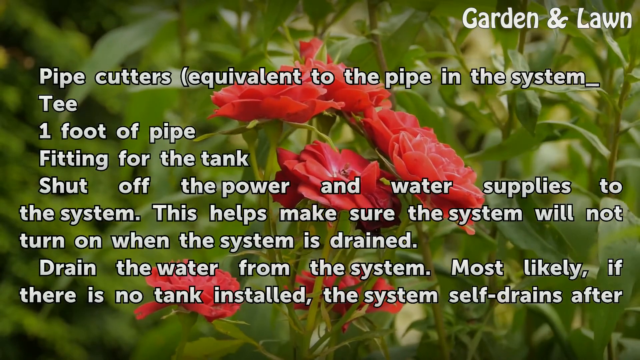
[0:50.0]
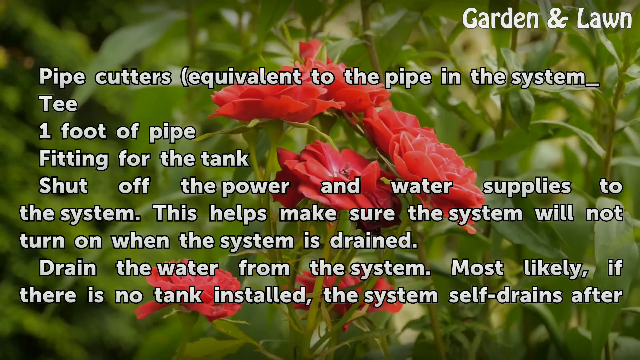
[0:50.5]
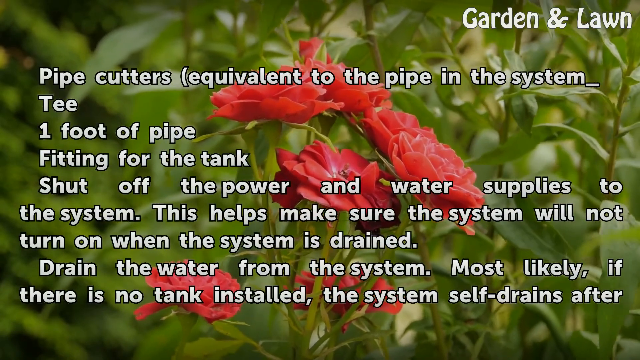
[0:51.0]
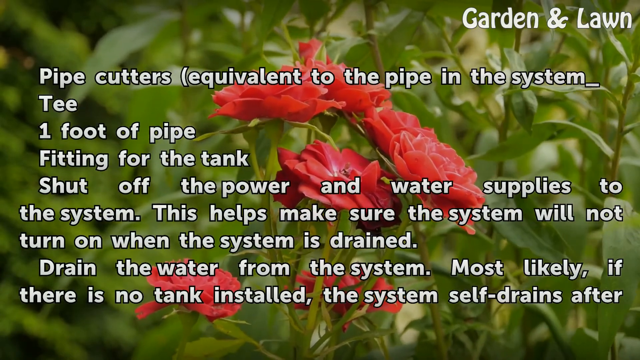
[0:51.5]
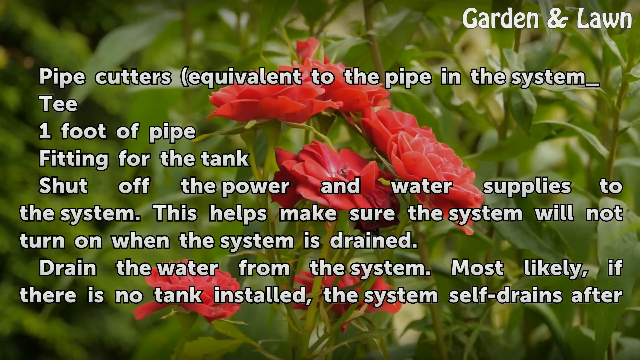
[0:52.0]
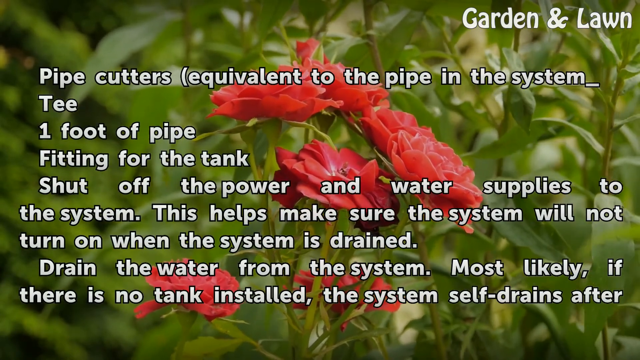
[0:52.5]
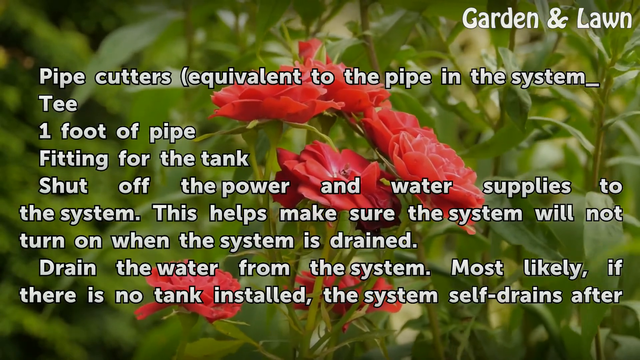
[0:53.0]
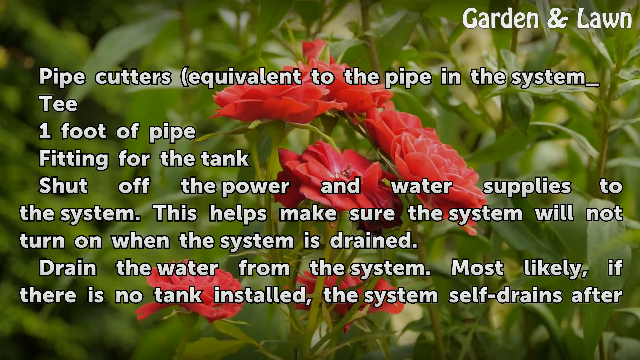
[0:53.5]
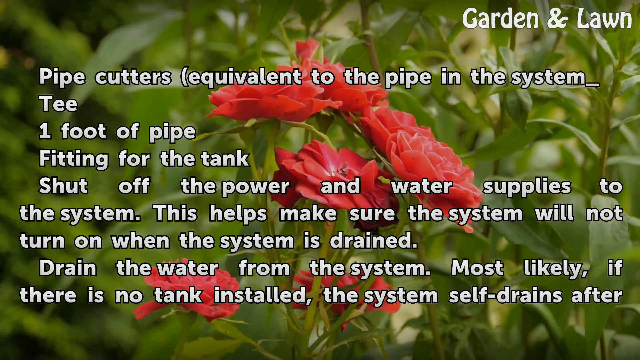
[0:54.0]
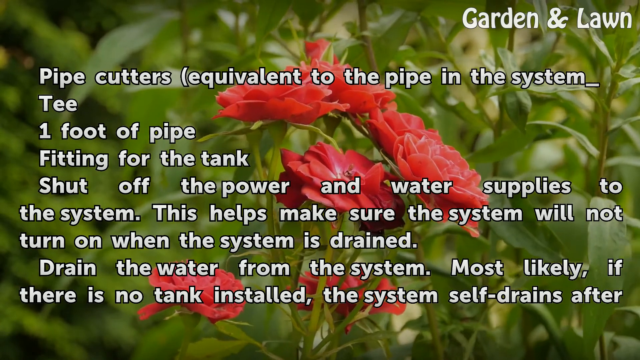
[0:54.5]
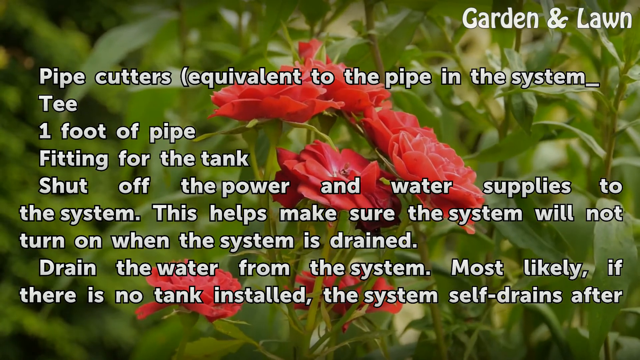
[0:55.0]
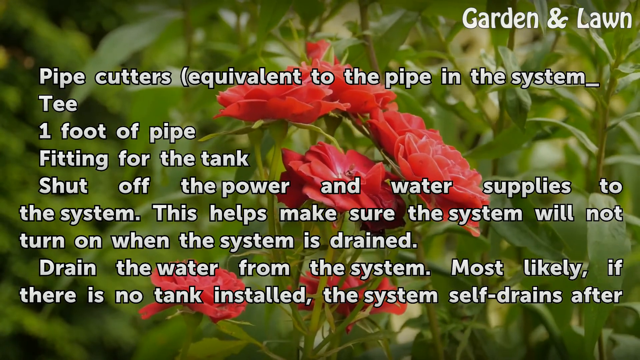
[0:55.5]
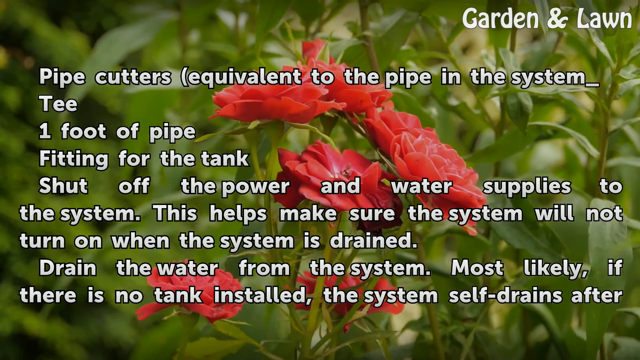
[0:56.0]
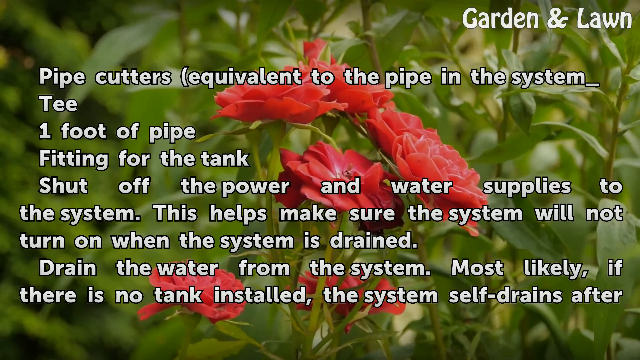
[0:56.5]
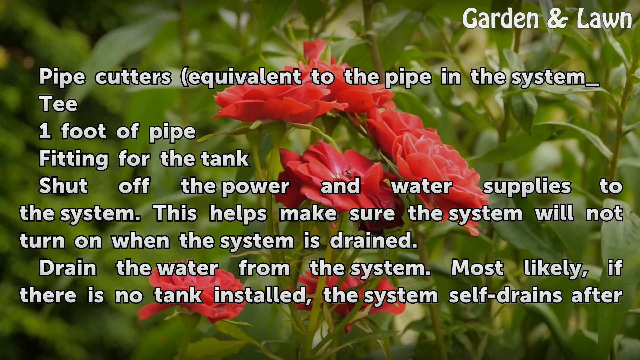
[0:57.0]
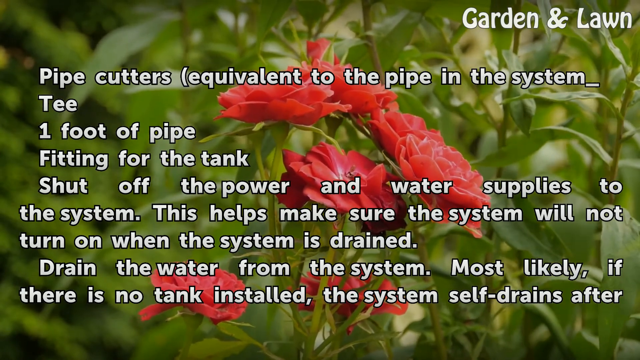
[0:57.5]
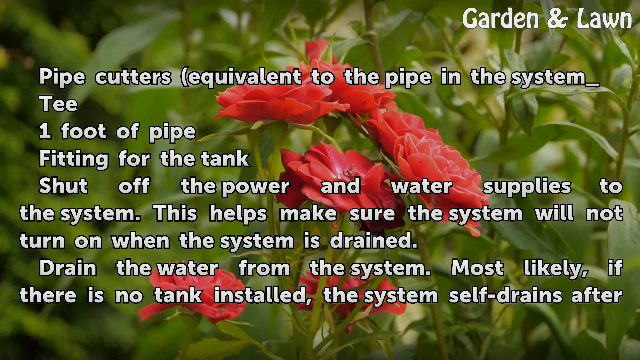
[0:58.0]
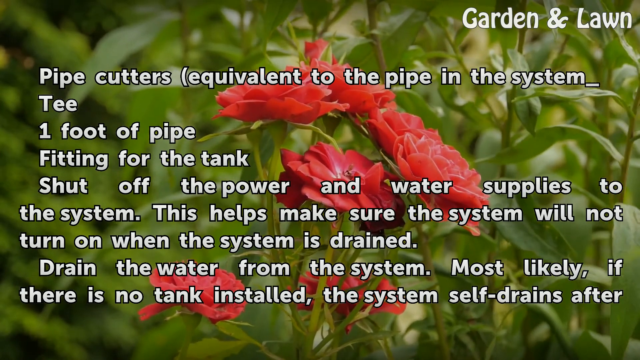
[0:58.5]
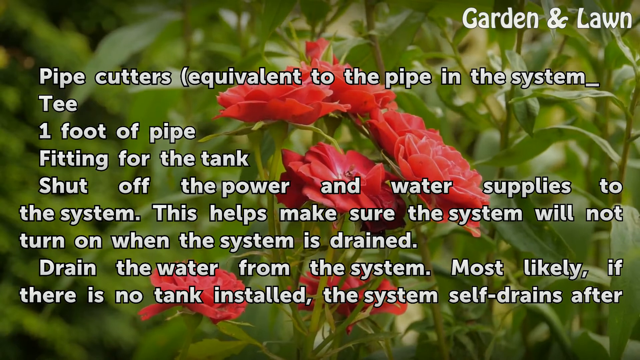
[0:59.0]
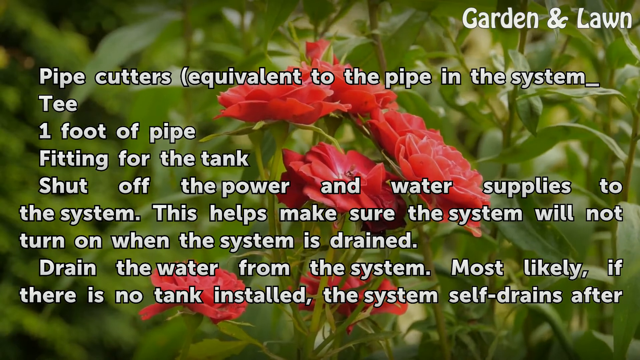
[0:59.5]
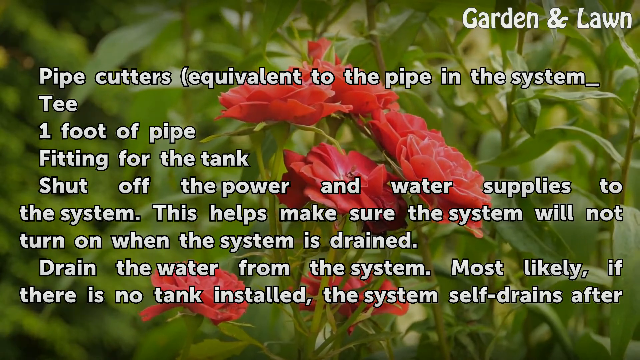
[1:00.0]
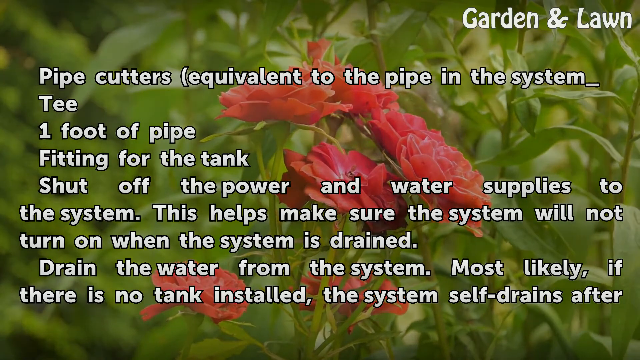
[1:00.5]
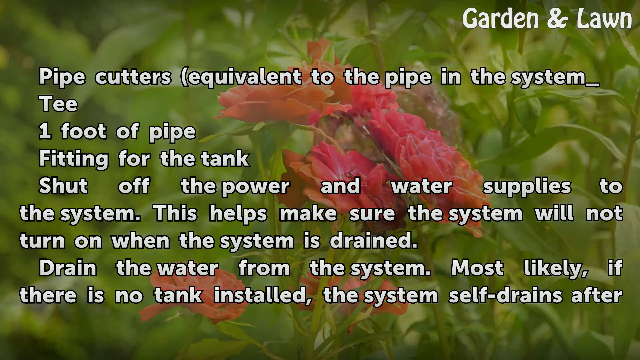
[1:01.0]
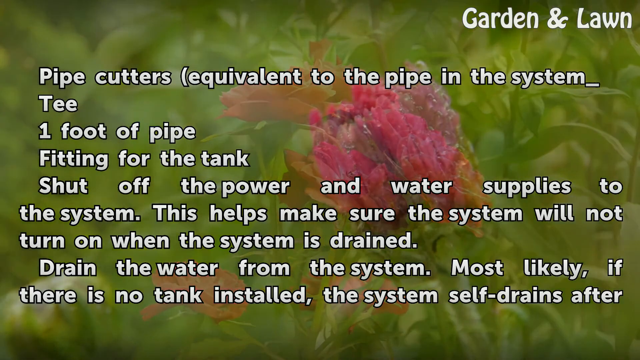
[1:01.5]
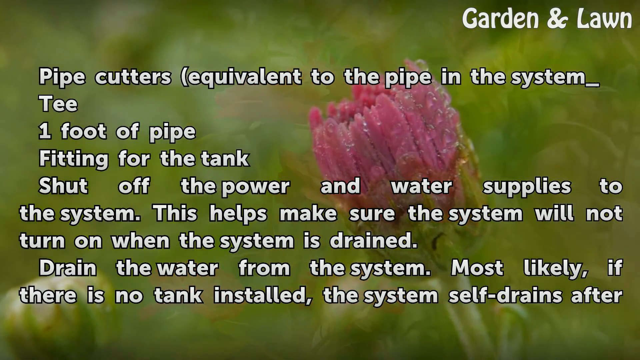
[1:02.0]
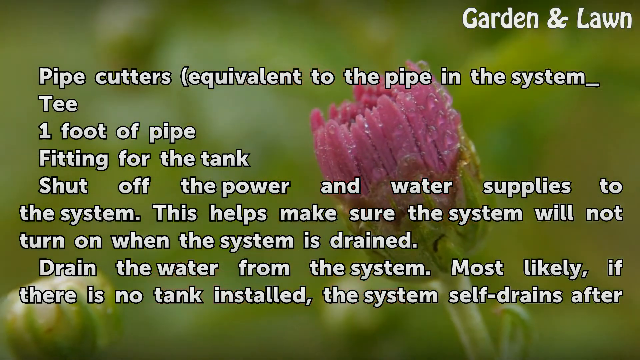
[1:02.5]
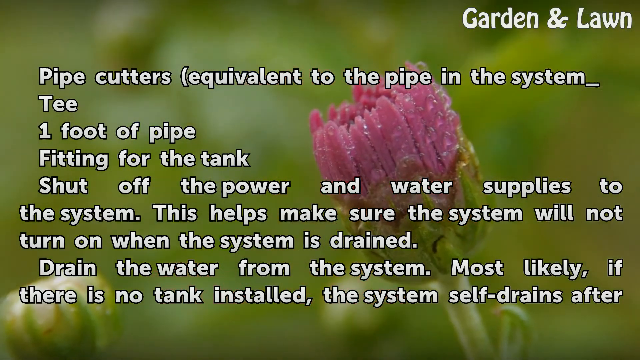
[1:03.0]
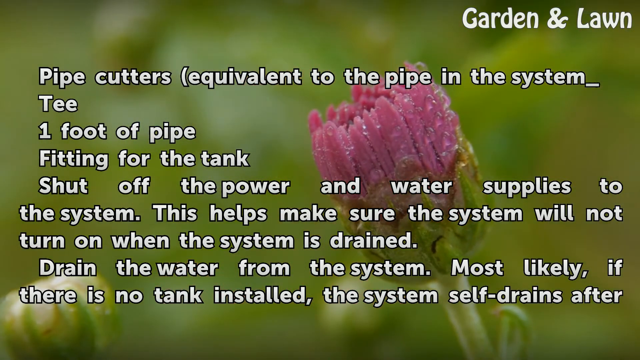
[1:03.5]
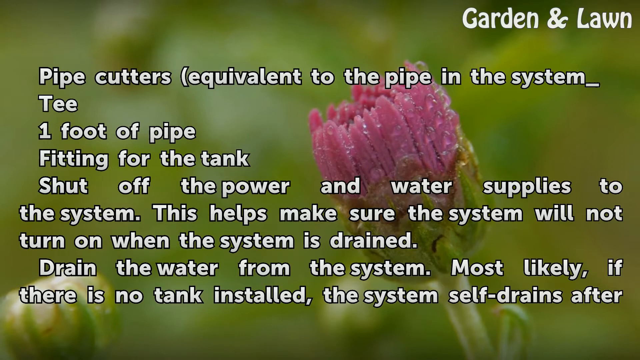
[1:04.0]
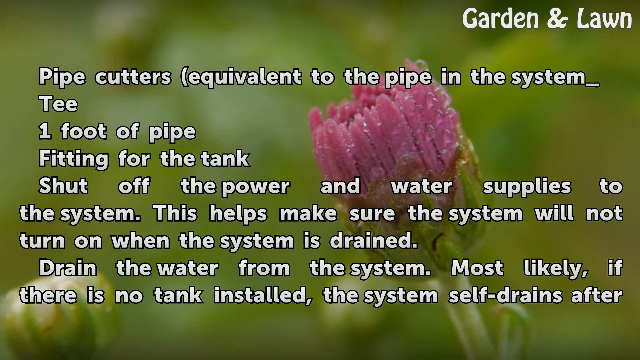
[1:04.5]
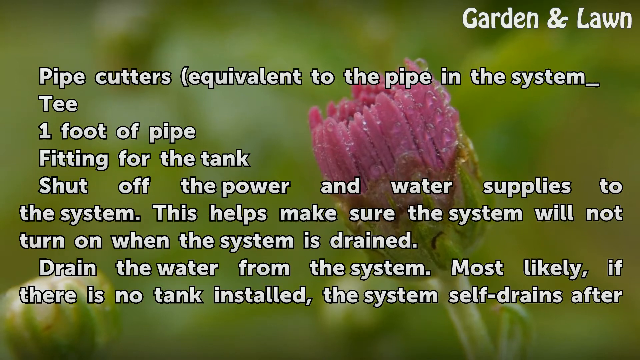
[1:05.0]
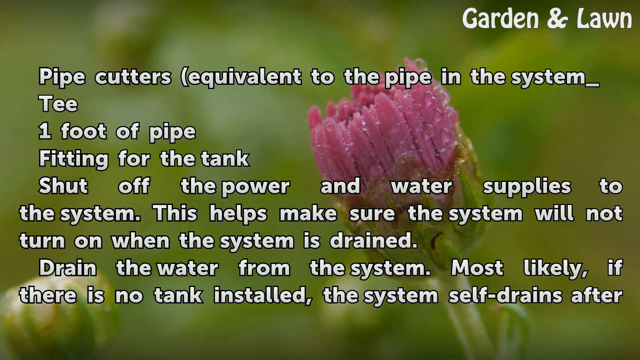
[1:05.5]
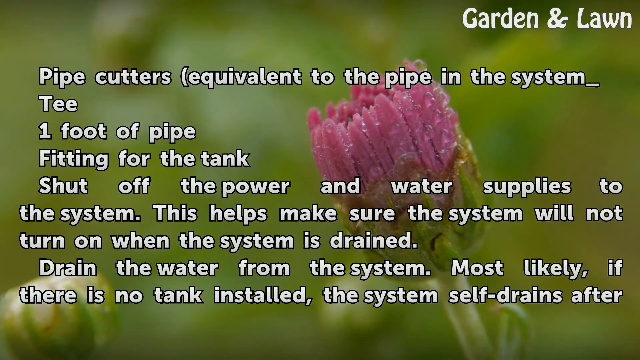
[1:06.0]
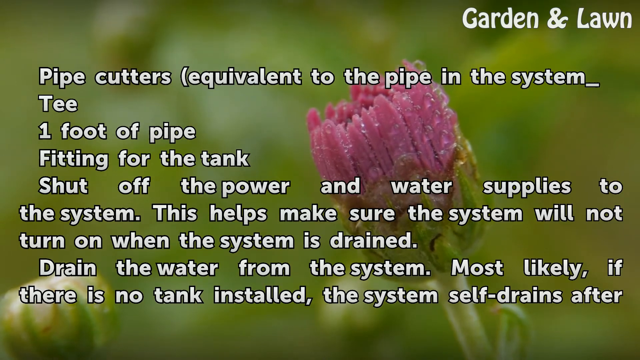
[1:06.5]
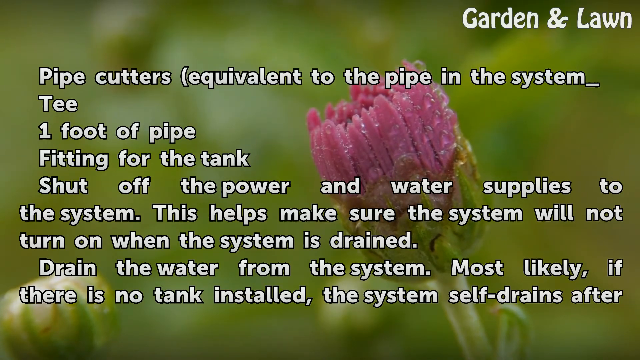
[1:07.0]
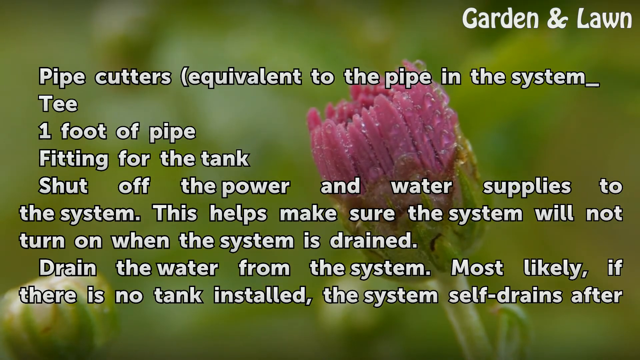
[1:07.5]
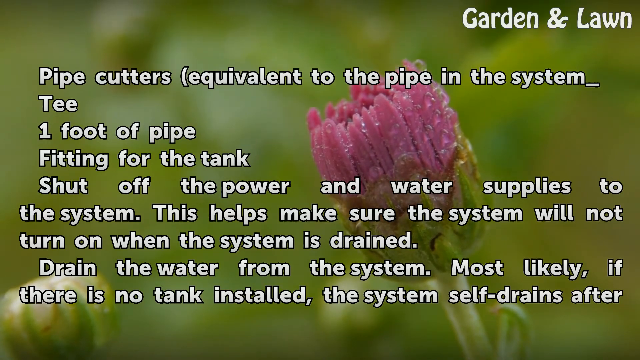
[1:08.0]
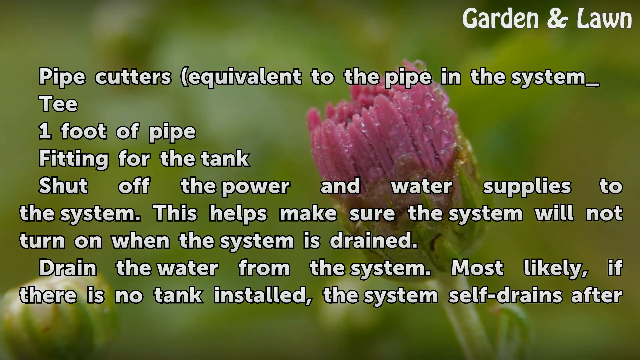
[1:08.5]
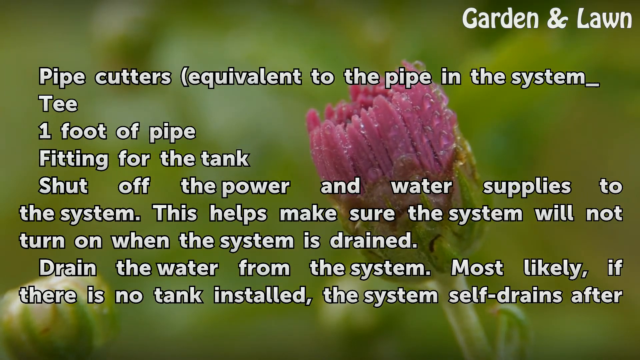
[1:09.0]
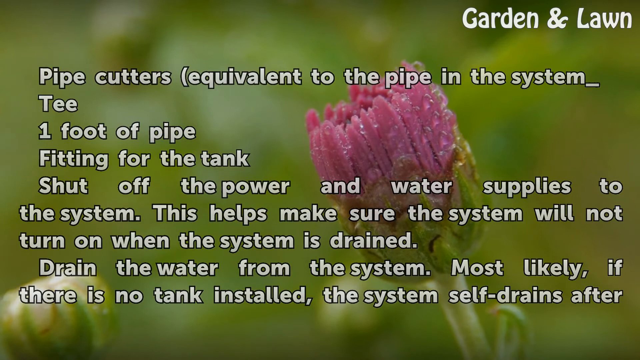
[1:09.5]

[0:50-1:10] The garden and lawn video shows the list of requirements for the pressure tank: "pipe cutters (equivalent to the pipe in the system, Tee, one foot of pipe, fitting for the tank", followed by "shut off the power and water supplies to the system. This helps make sure the system will not turn on when the system is drained. Drain the water from the system, most likely if there is no tank installed the system self drains after." Behind the caption is a red rose bush moving in the breeze, with at least six flower heads on tall pale green stems. Behind the rose bush are lots of green leaves, which also move slowly together in the breeze. The image then changes to a pink flower still in bud, its petals all bunched together on a single stem.